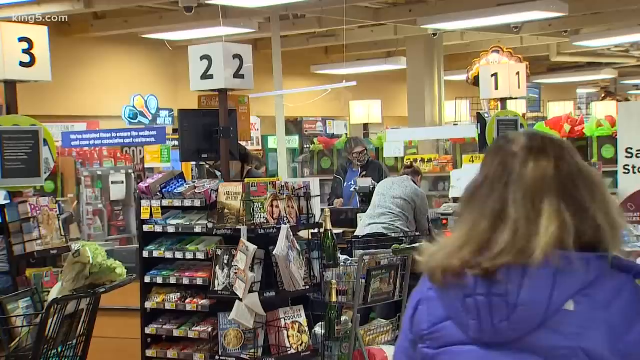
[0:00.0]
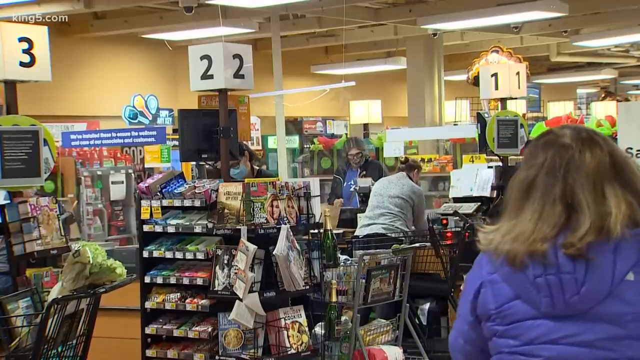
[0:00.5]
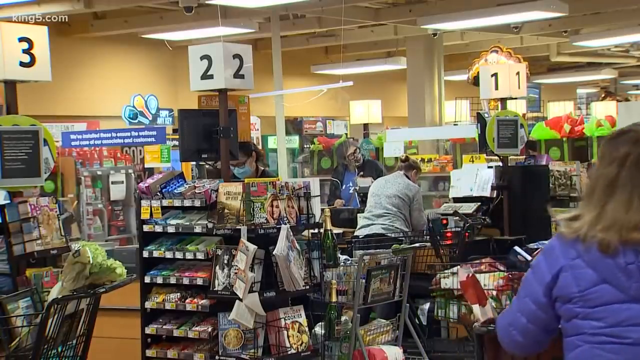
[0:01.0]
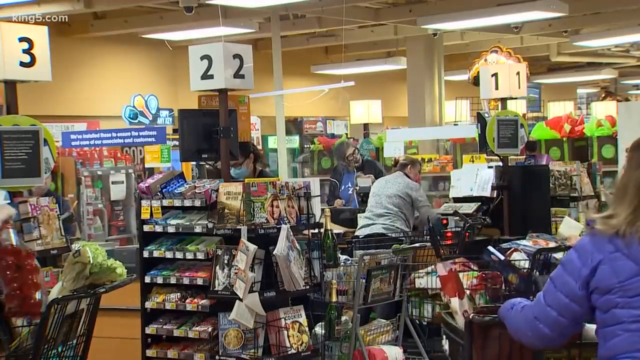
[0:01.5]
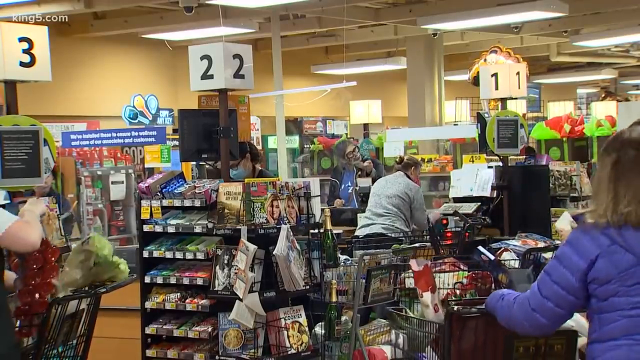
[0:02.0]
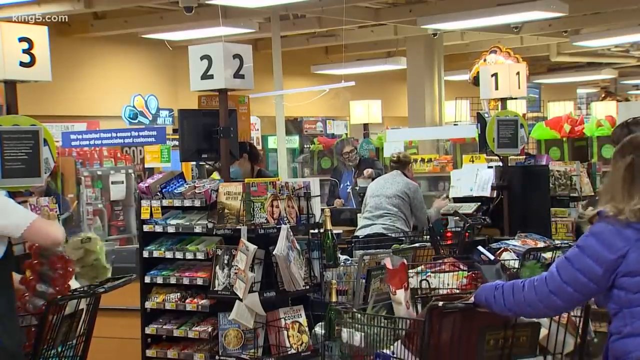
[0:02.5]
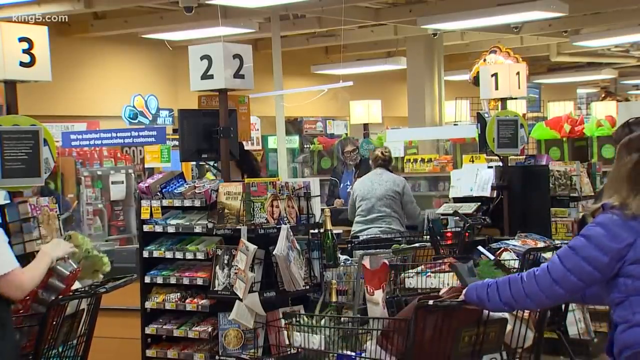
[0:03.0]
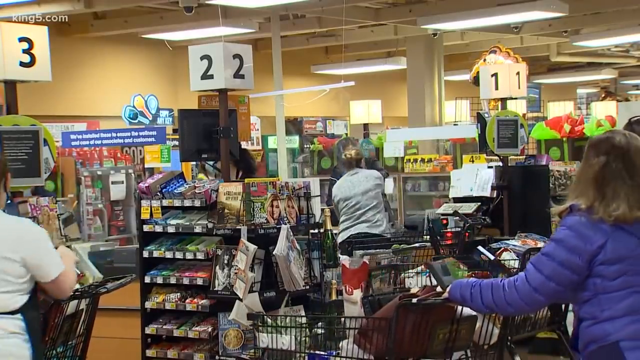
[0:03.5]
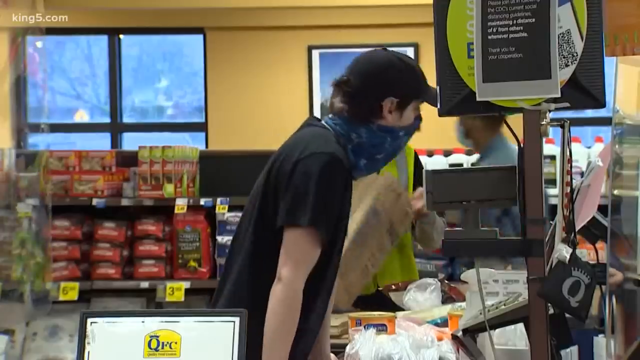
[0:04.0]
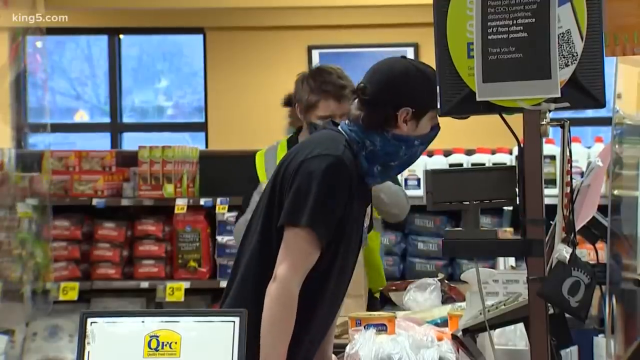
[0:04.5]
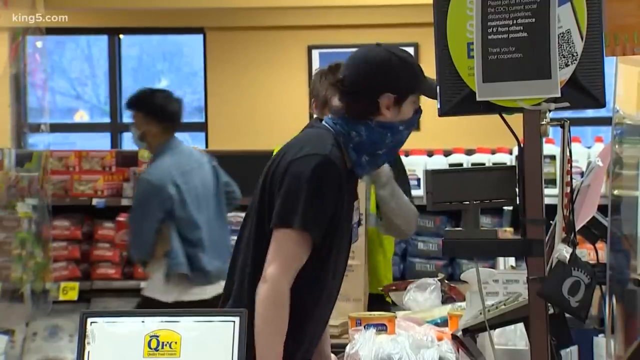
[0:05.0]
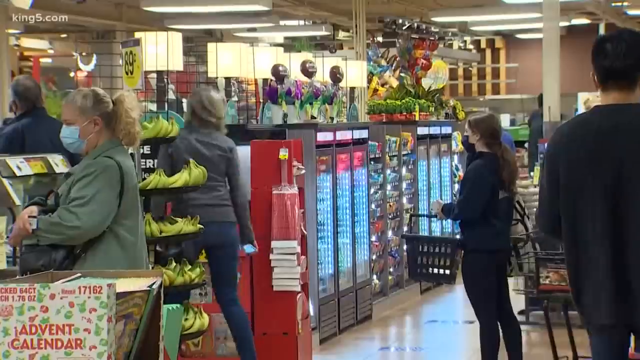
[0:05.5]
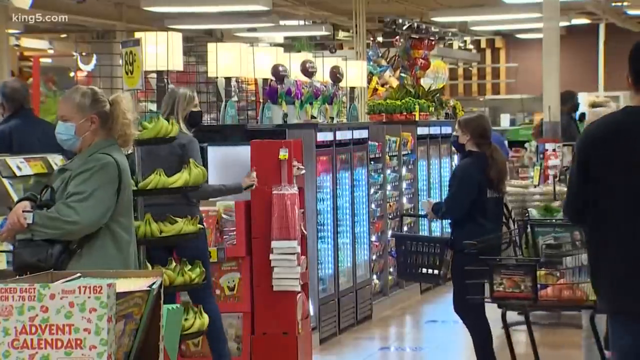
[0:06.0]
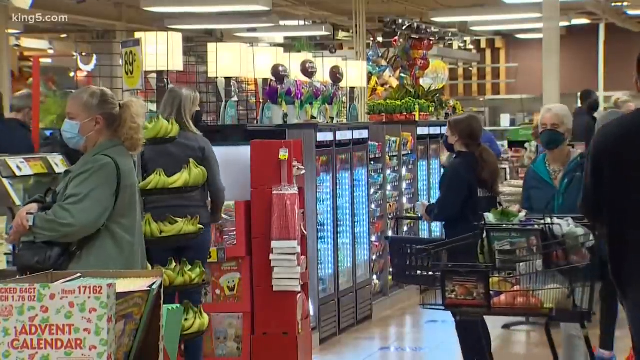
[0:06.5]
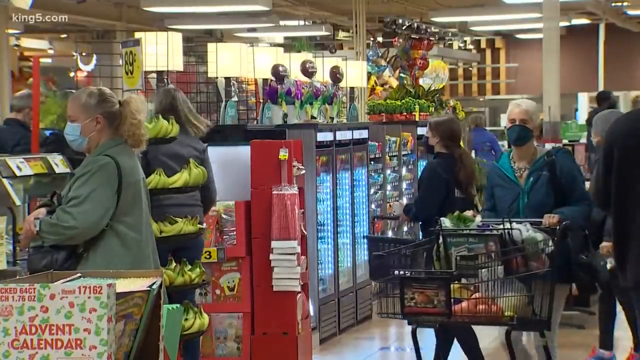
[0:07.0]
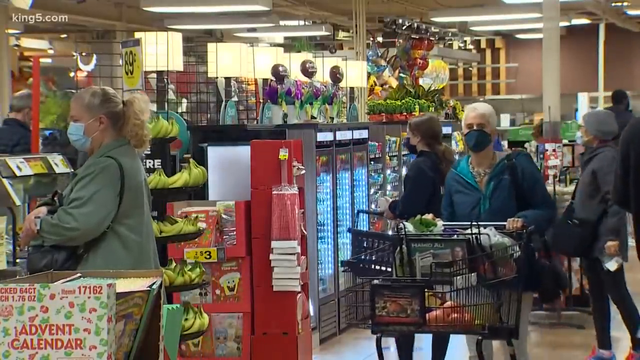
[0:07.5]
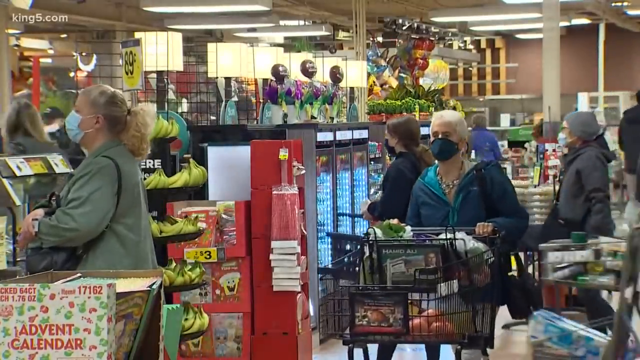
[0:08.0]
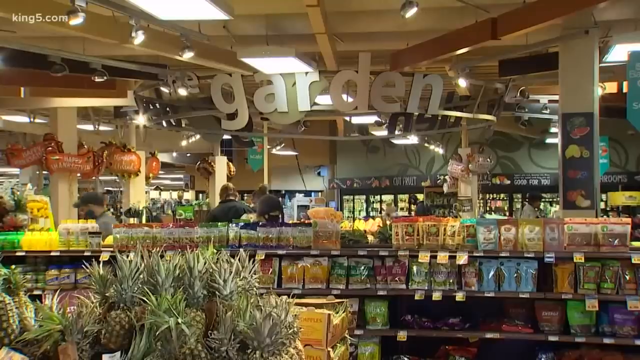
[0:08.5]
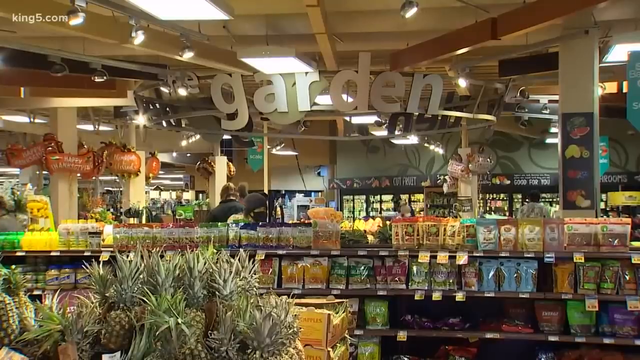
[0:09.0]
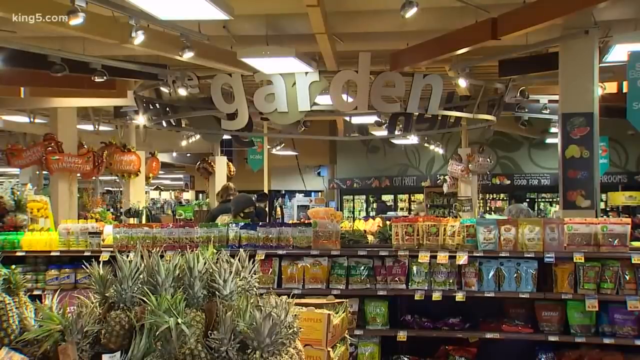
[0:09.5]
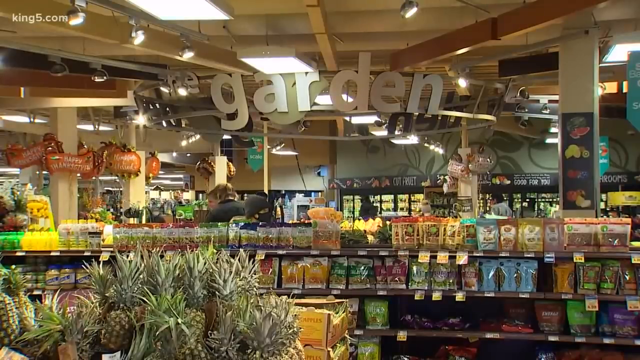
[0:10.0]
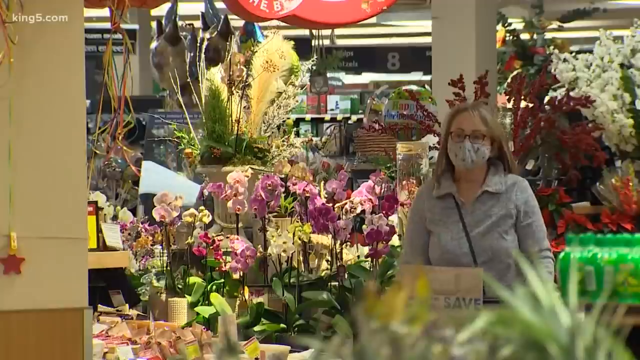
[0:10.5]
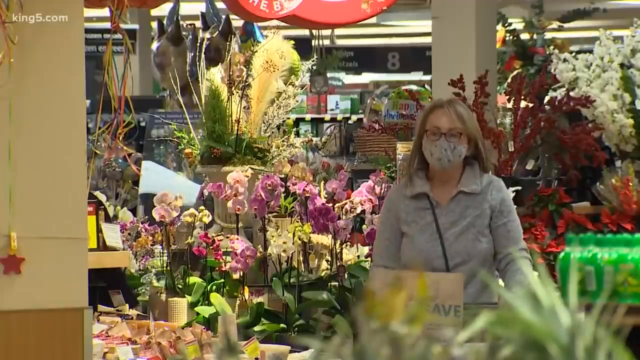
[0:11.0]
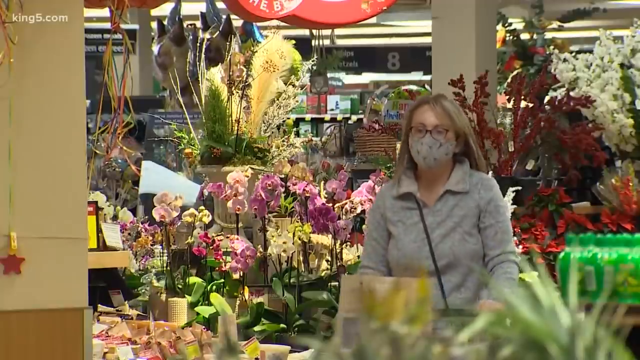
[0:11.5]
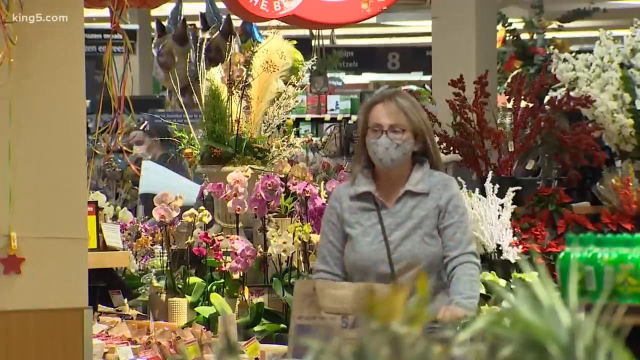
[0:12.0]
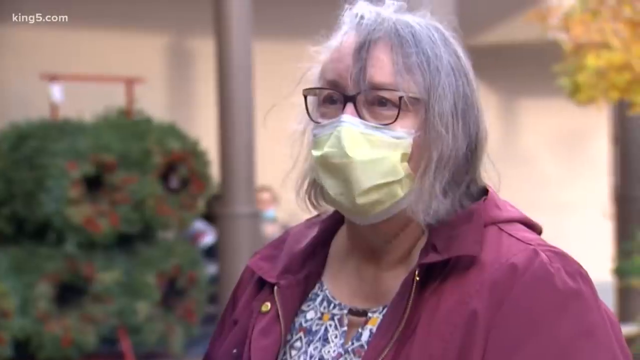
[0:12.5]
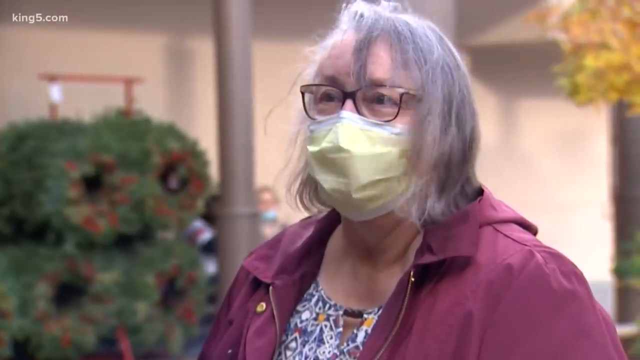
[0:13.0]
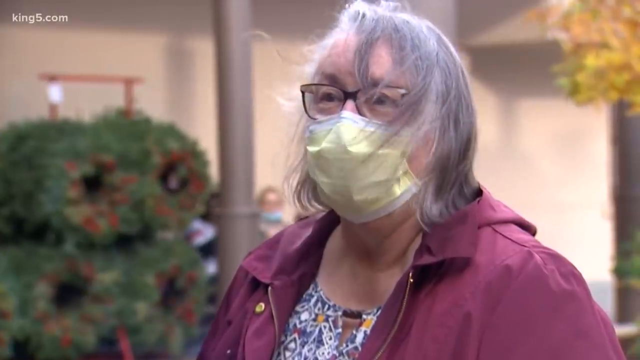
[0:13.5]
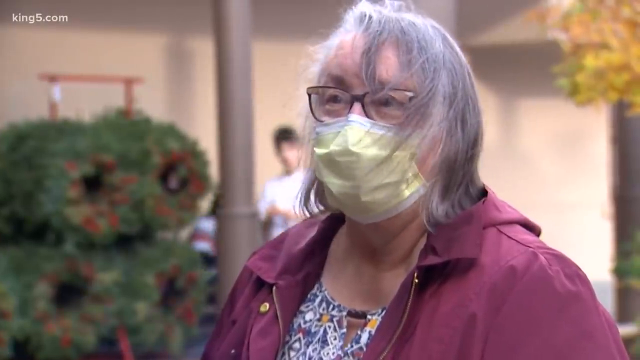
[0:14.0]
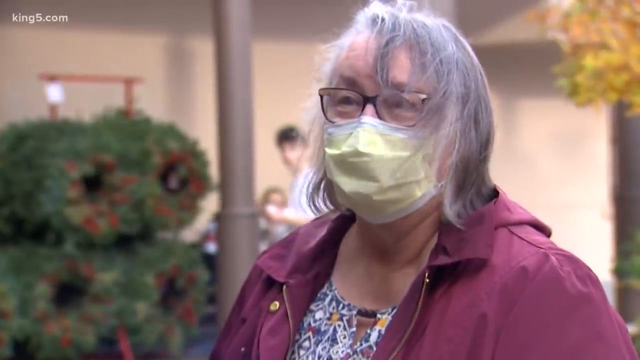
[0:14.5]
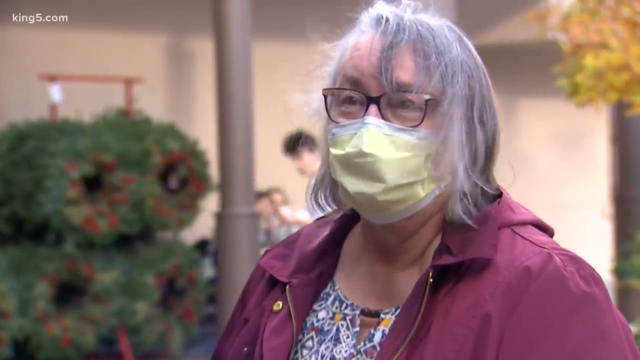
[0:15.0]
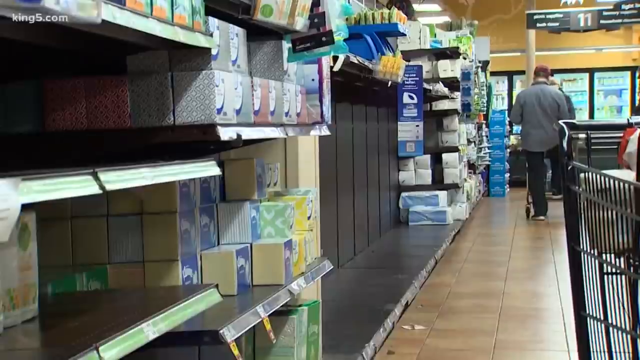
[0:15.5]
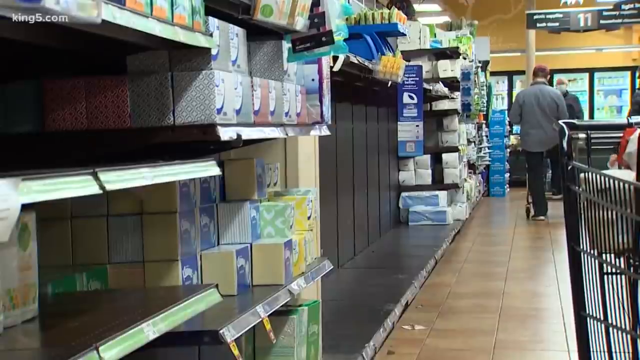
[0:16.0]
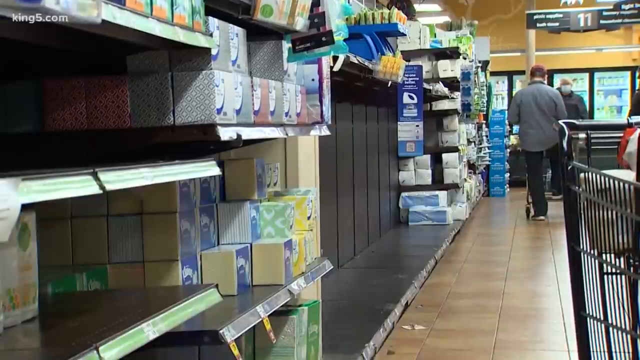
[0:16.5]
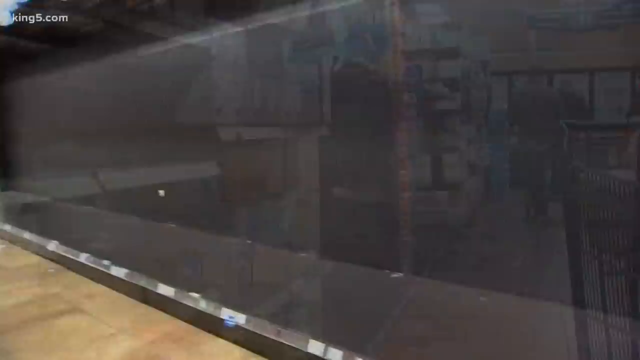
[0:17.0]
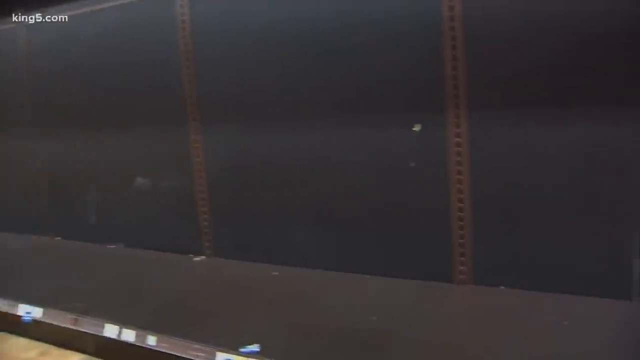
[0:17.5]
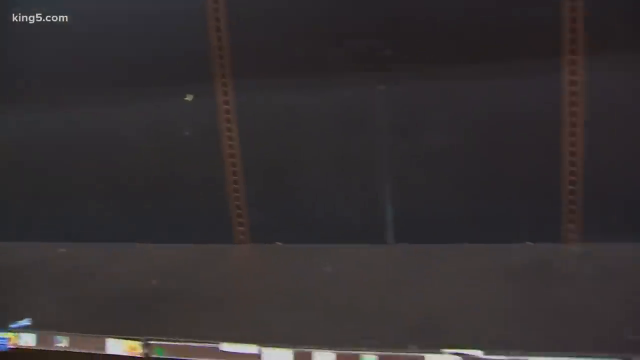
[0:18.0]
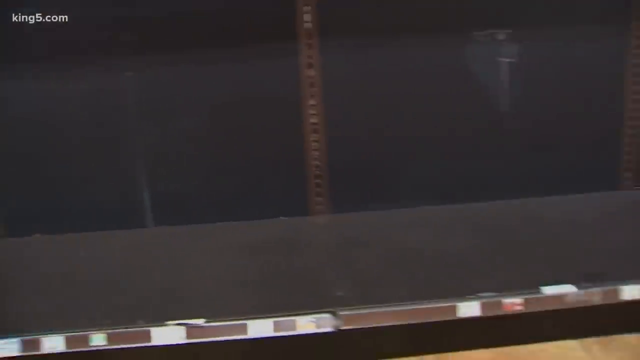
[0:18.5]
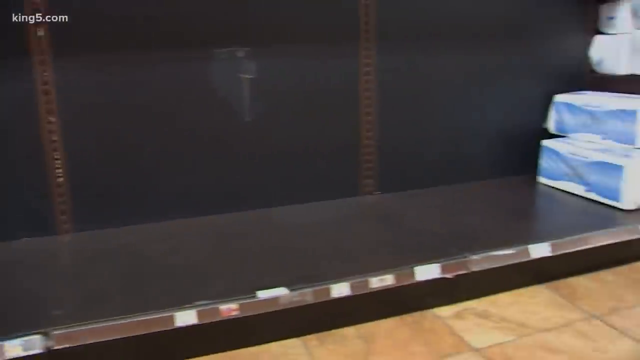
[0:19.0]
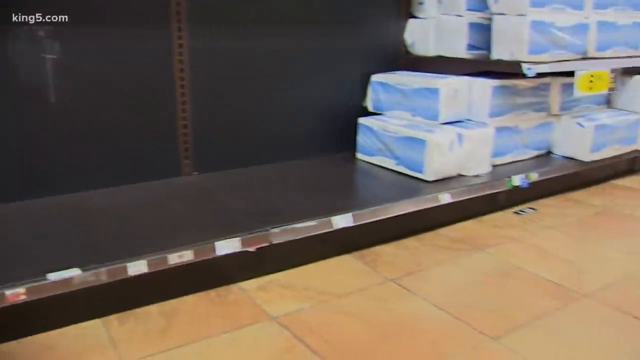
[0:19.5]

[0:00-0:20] The video opens inside a grocery store, where the numbers 1, 2 and 3 are on small pillars above the checkout aisles. Three rows are visible, and three of the cashiers can be seen from this angle, along with people in line with their shopping carts and different groceries in a bright setting. It cuts to a close-up of a cashier wearing a blue mask, a black hat and a black t-shirt, leaning over the counter and making slight body movements. Another angle shows people getting in line for checkout. The video then moves to another area of the store, where the word "garden" is labeled at the top near the ceiling, with a bunch of seeds below on a shelf, followed by a close-up of some pineapples. Next, a woman walks towards the camera through the store. Then a woman wearing a yellow mask is interviewed close to the camera; she has gray hair and a pink jacket and speaks towards the side of the camera. The scene changes to an empty shelf in the toilet paper section, completely empty where the toilet paper would be, and another angle of that empty section pans across, showing the products there. Finally, another angle shows more shoppers shopping the aisles.